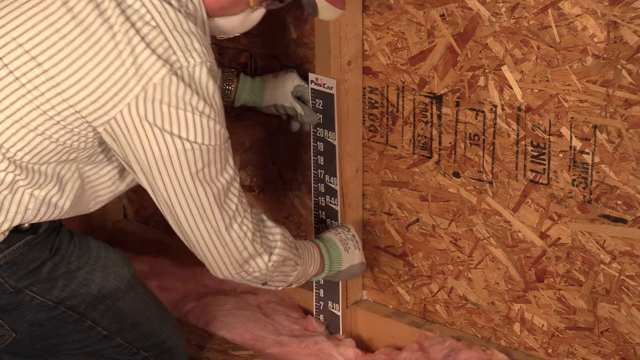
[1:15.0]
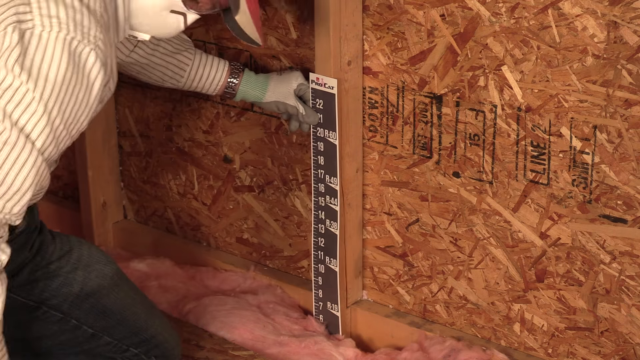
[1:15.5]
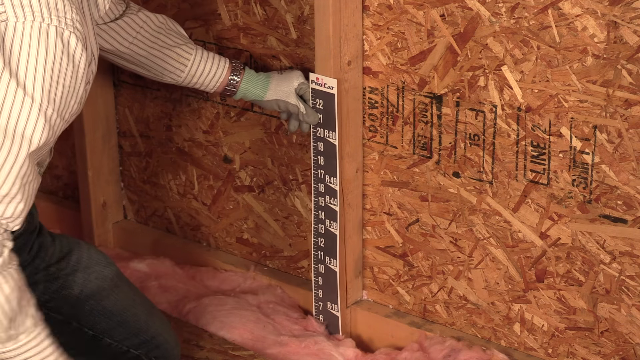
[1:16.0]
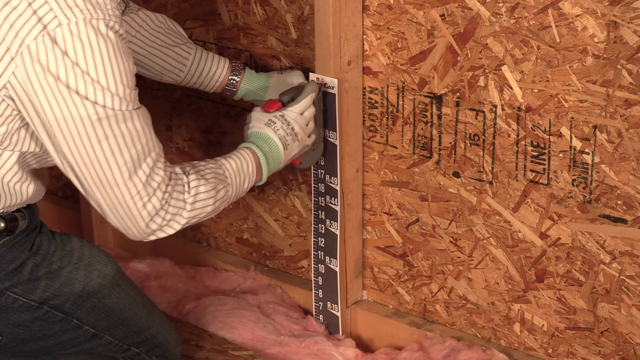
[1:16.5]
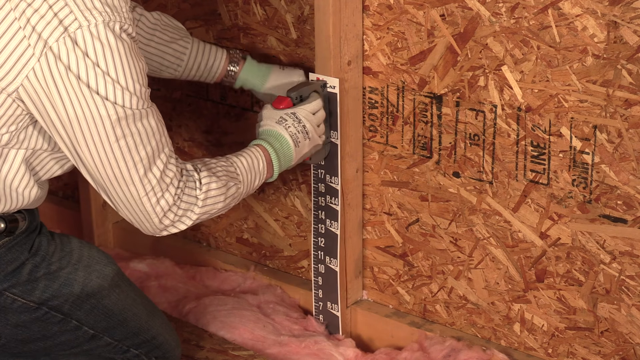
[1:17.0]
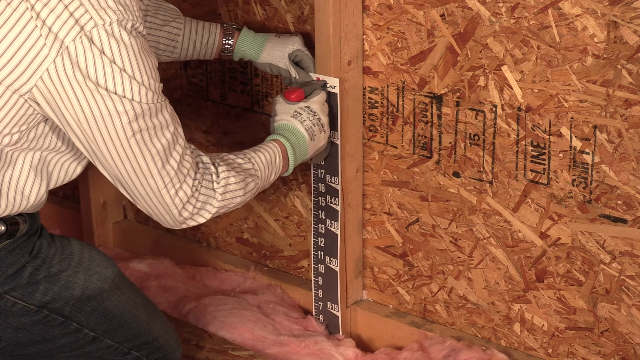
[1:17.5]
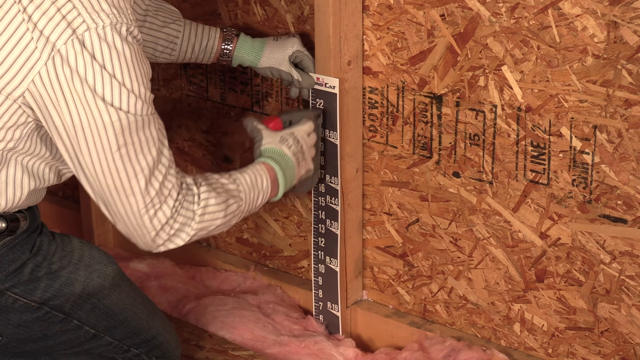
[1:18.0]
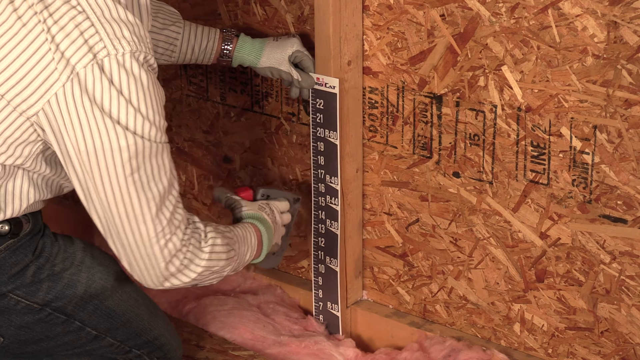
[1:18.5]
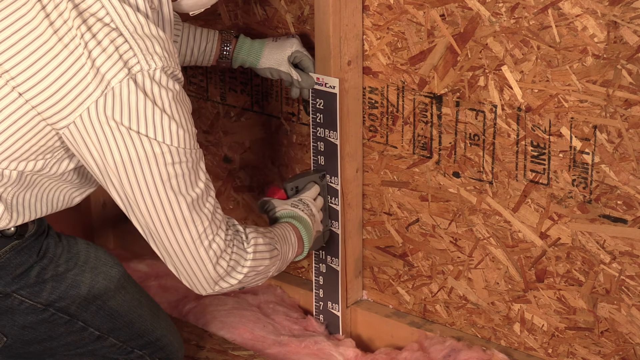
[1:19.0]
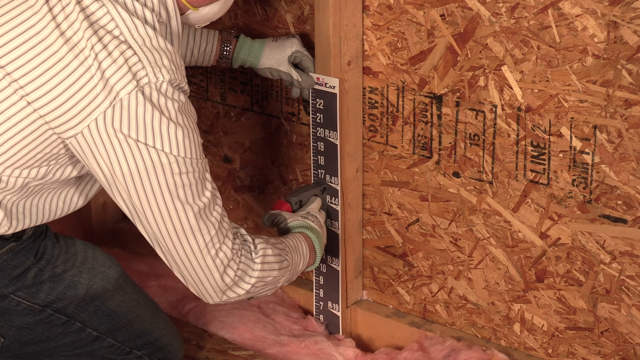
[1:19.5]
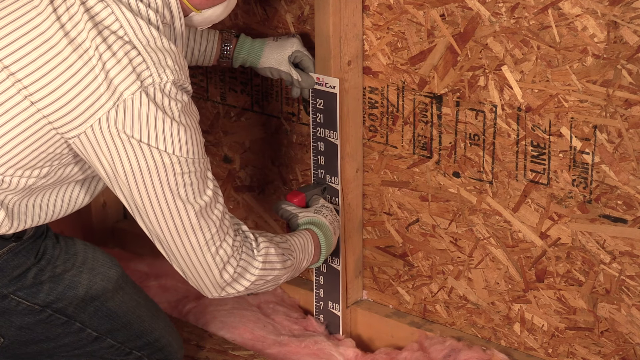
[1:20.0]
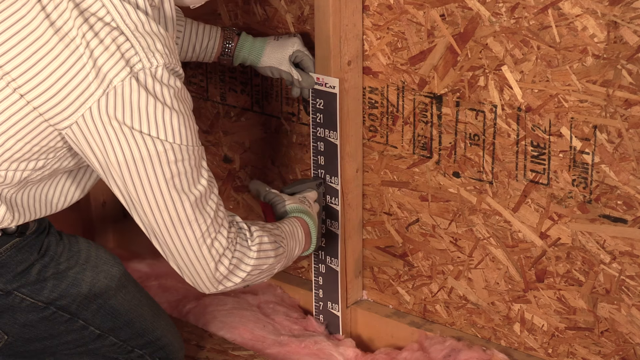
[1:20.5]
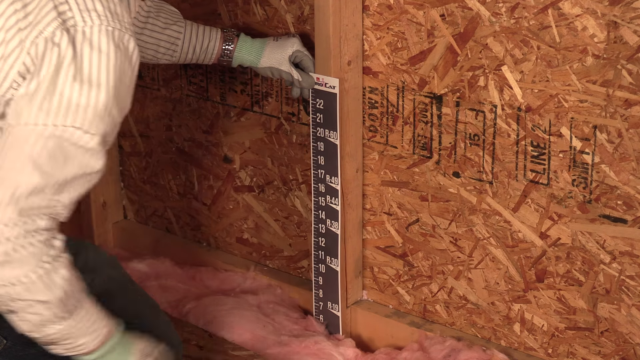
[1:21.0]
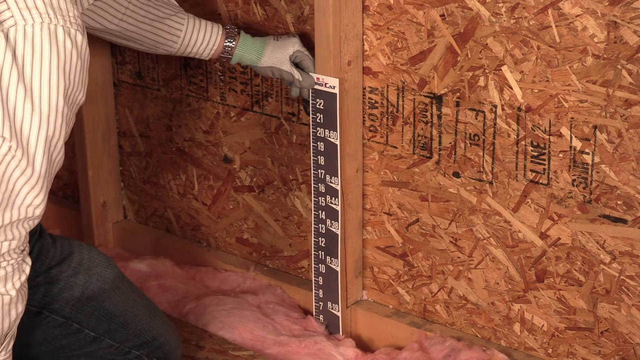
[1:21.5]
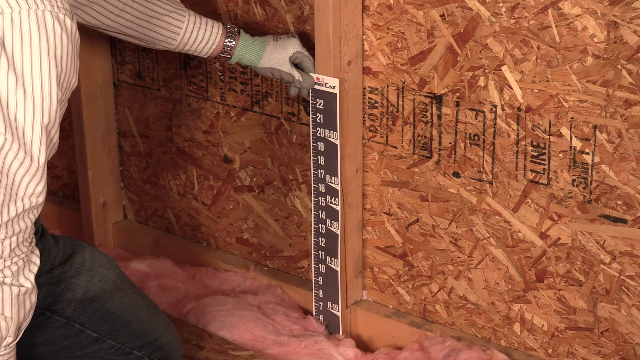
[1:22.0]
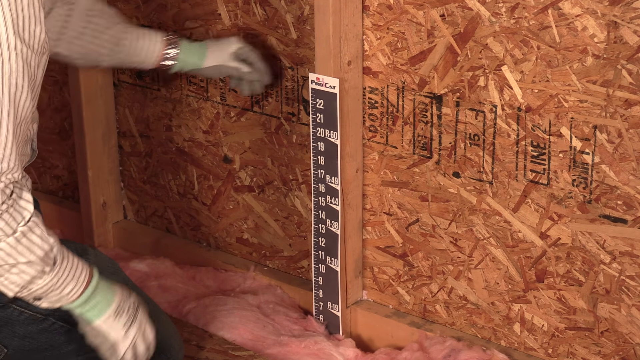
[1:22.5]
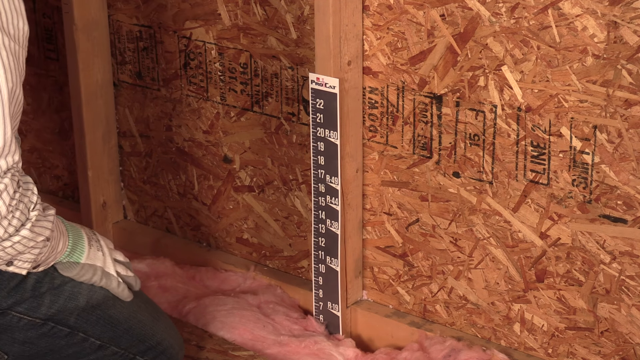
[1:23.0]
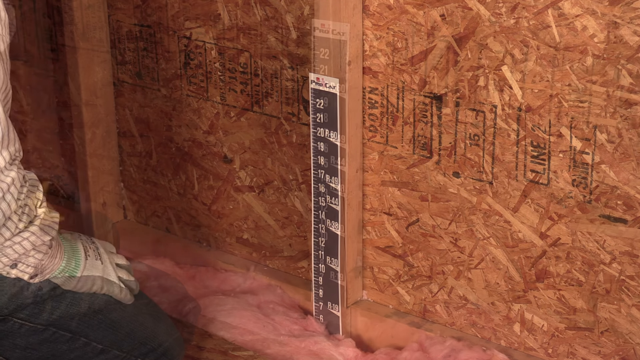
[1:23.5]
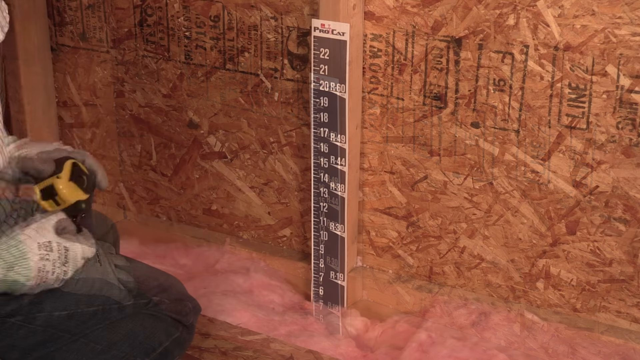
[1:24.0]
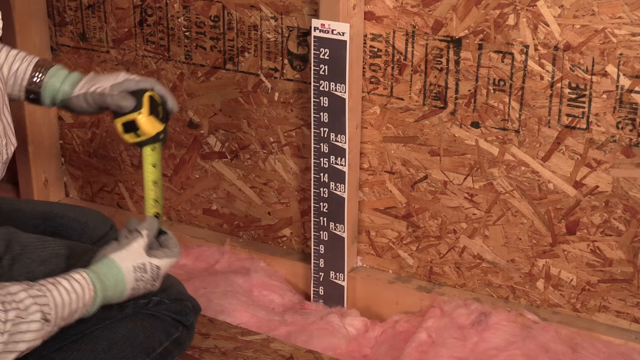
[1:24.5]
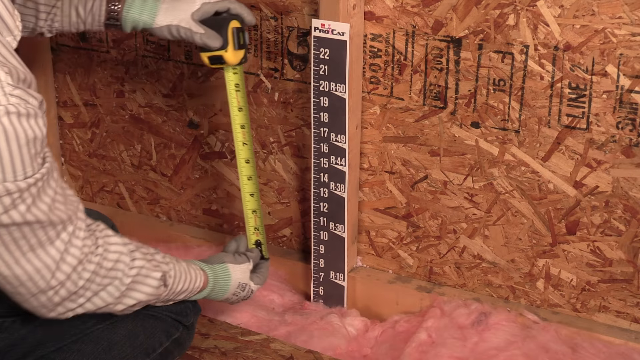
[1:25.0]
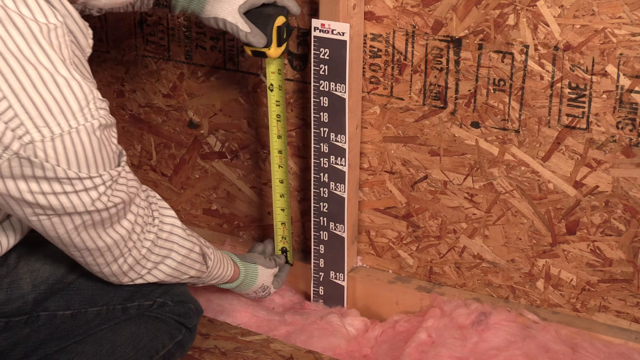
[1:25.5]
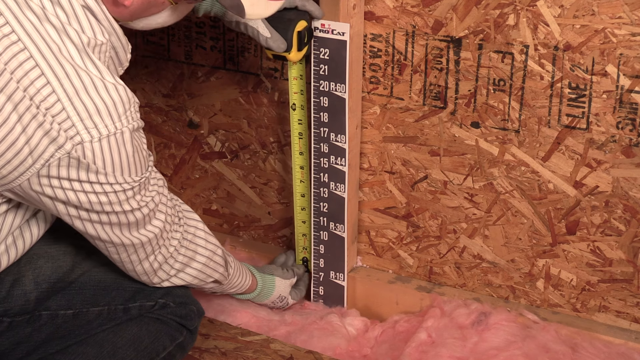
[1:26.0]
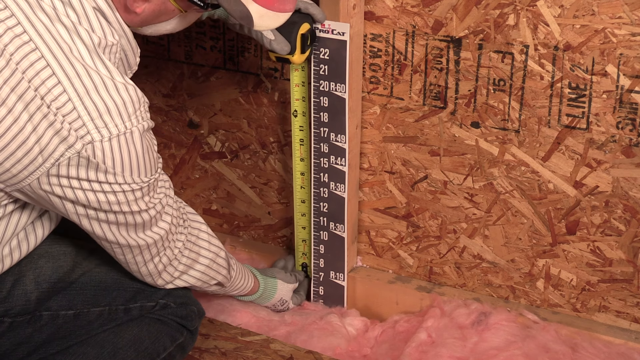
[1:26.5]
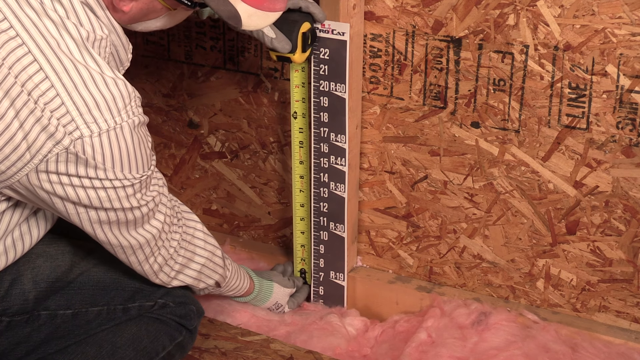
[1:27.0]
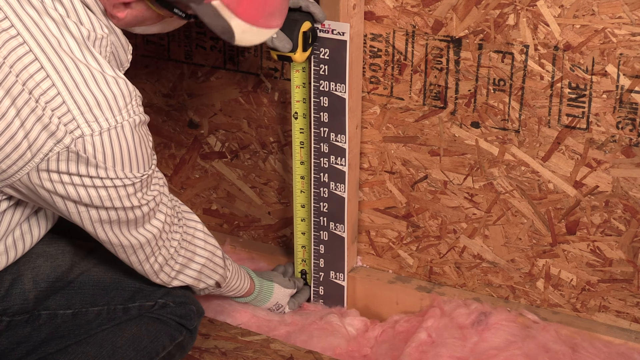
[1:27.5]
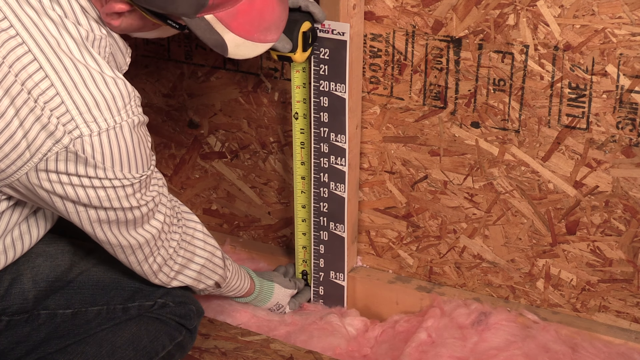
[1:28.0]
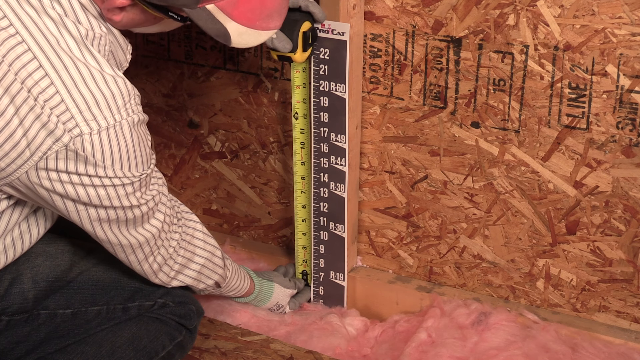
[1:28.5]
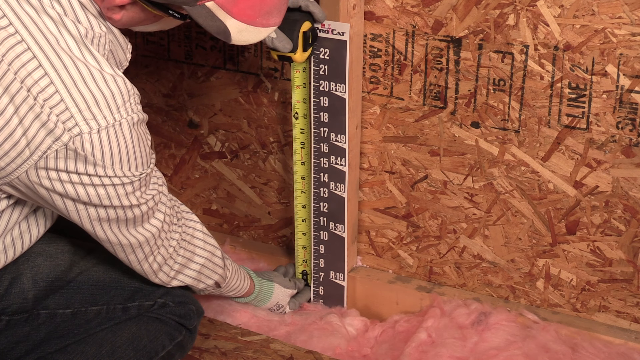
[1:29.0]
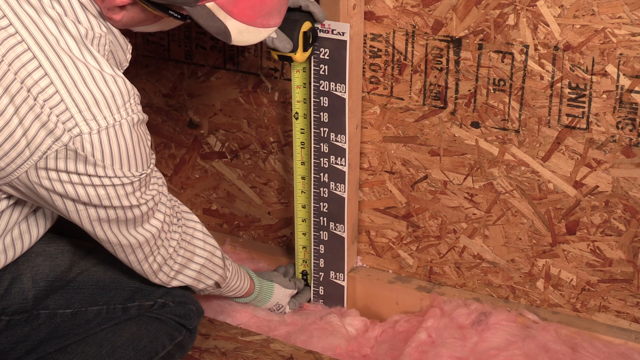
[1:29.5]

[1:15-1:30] A man kneels on the left-hand side of the frame, working in an attic. Pink insulation is in front of his knees, and a particle board wall in front of him fills most of the background. He staples a black and white measuring paper to a board against the wall, behind the insulation, then uses an actual metal tape measure on the left of it to measure from the top of the insulation up to the top of the numbers on the measuring paper. The number at the top of the black and white piece looks like 22, and at the bottom it looks like 6, 7, 8, in consecutive numbers. Mostly only his knees are visible, with his head coming in from the upper left a few times; the bill of his cap is red, white, and black. He wears green and white gloves and a silver watch on his left wrist.